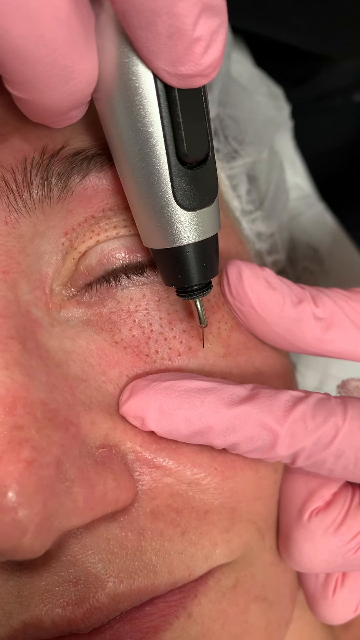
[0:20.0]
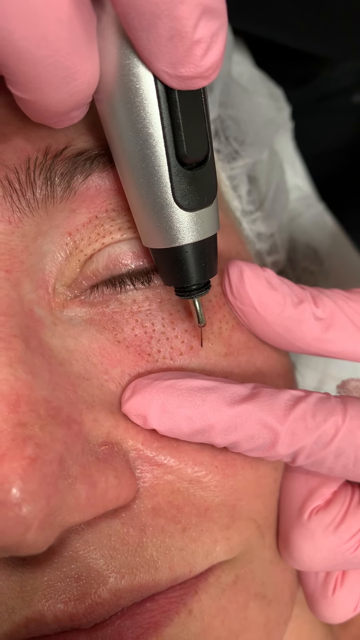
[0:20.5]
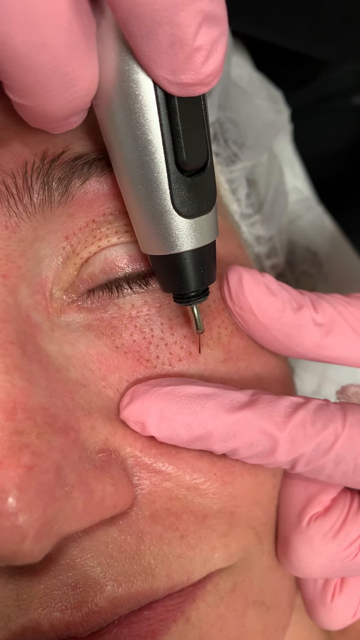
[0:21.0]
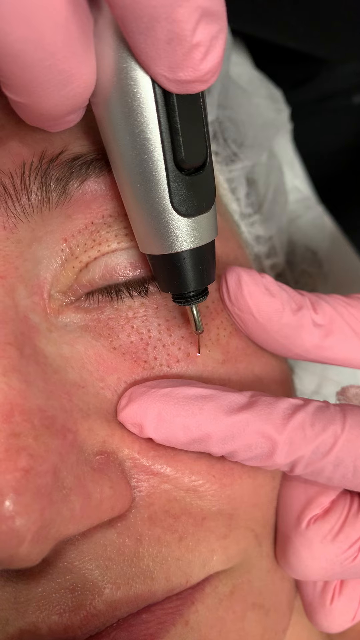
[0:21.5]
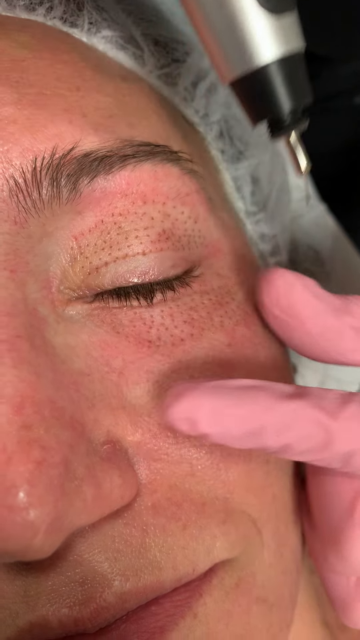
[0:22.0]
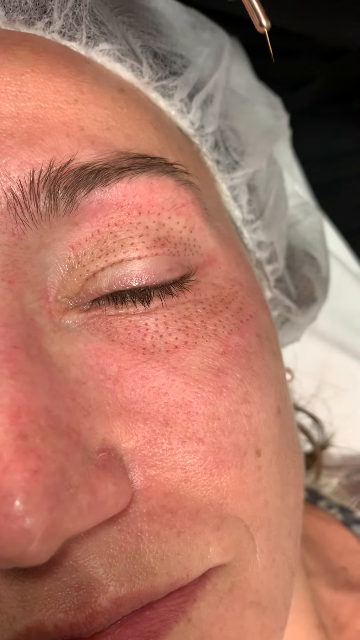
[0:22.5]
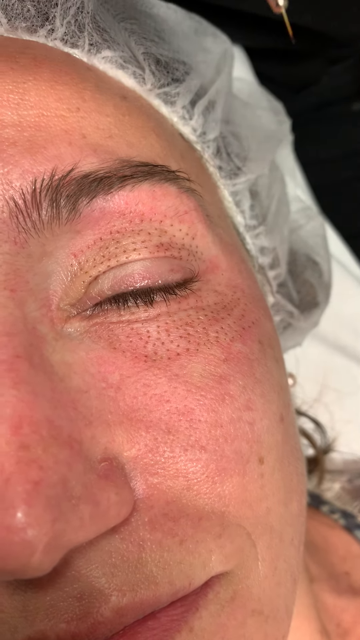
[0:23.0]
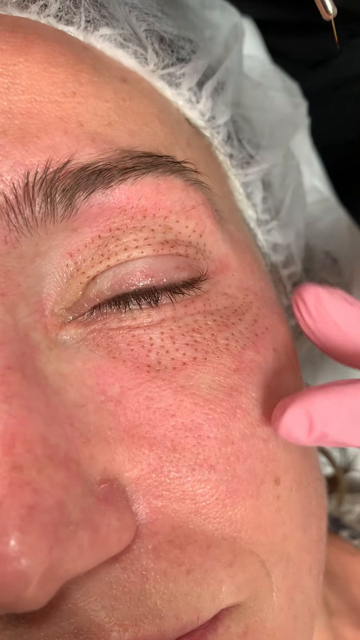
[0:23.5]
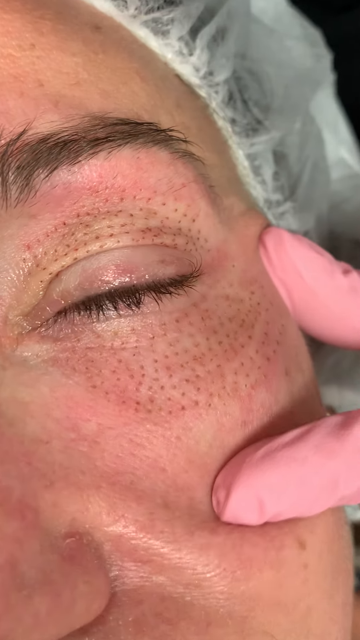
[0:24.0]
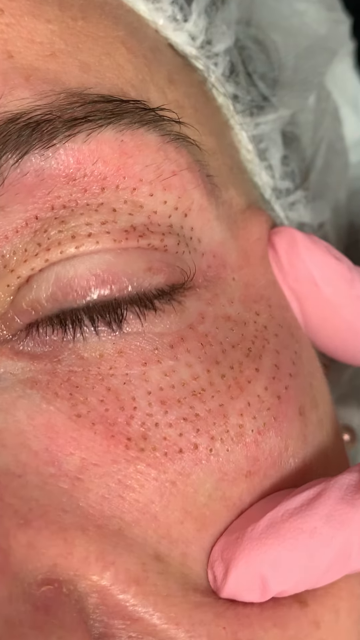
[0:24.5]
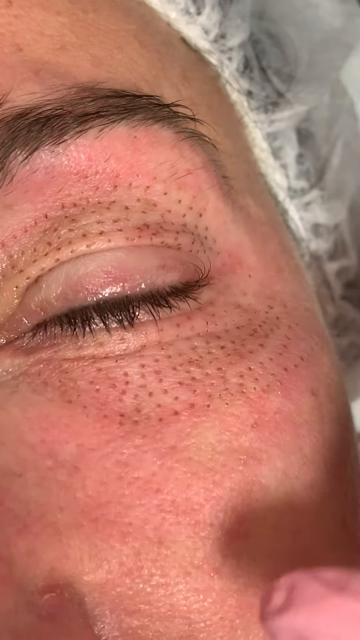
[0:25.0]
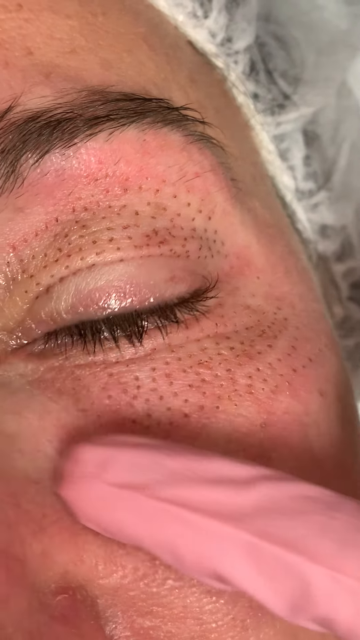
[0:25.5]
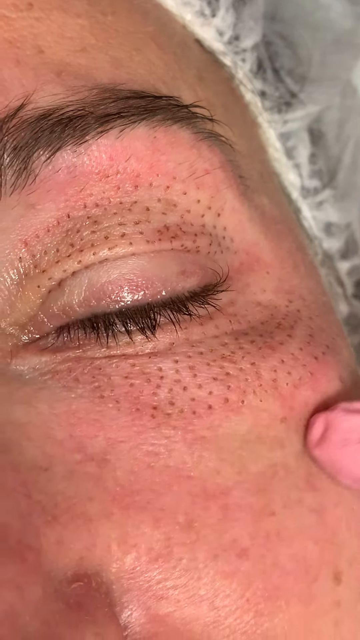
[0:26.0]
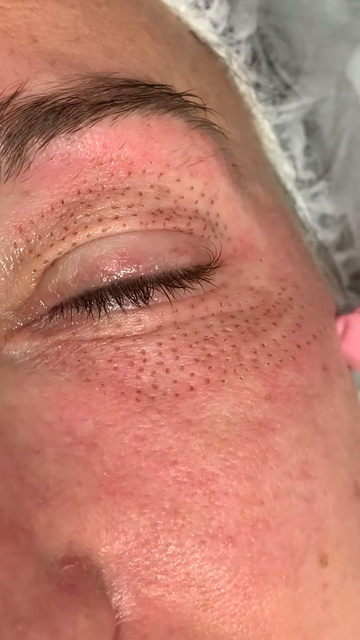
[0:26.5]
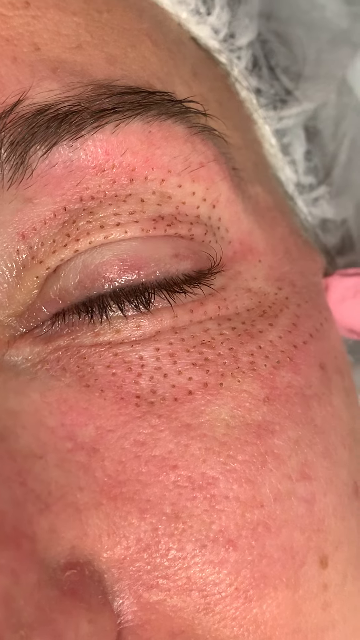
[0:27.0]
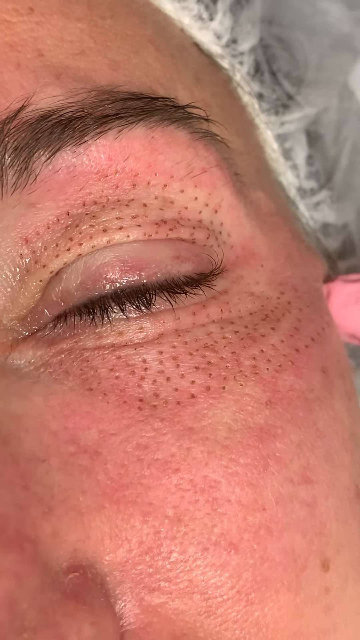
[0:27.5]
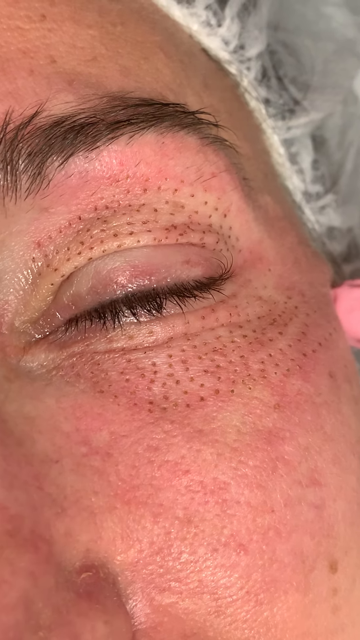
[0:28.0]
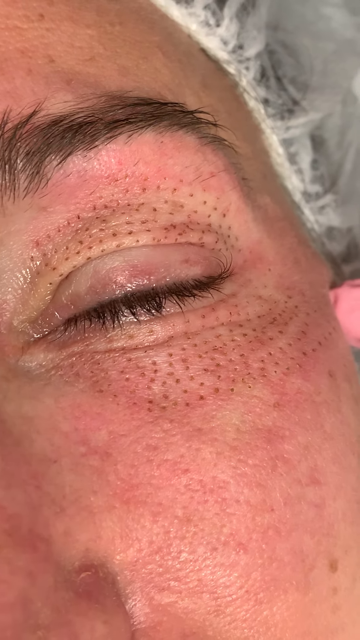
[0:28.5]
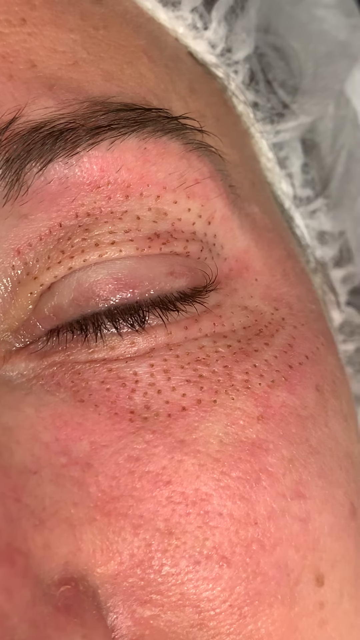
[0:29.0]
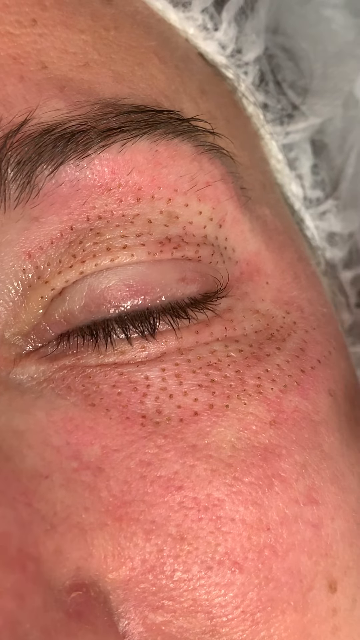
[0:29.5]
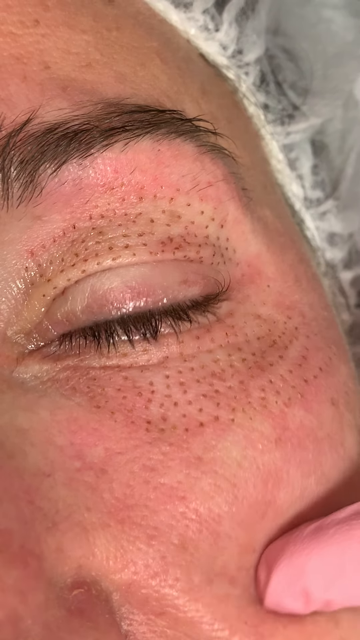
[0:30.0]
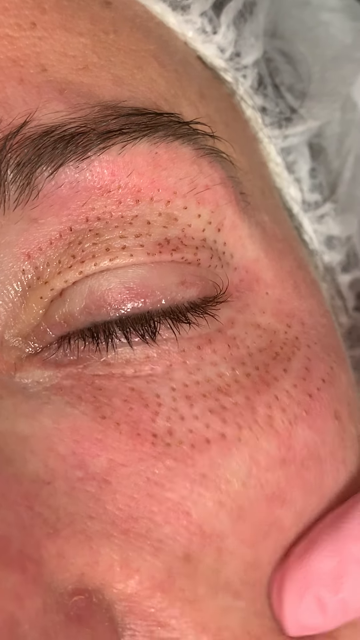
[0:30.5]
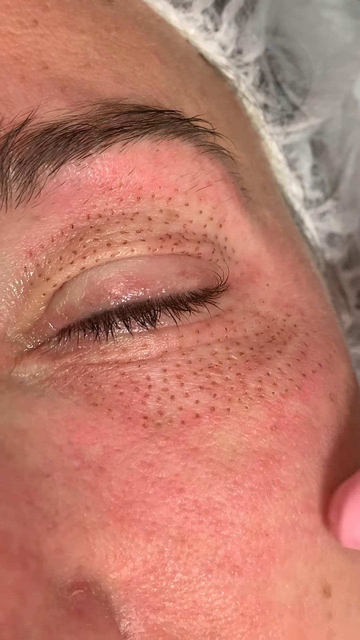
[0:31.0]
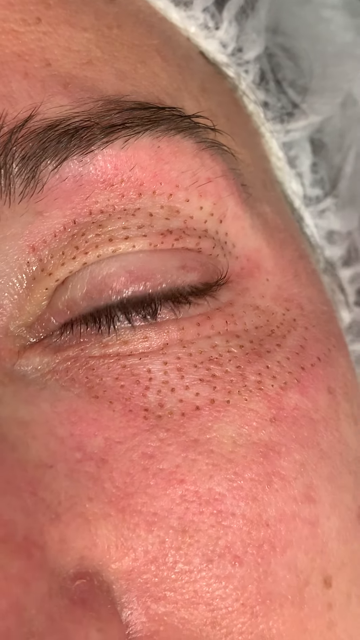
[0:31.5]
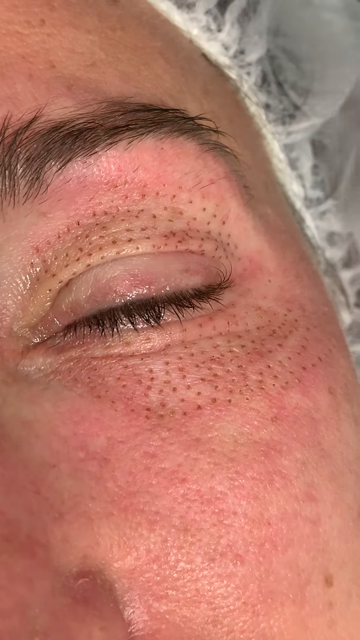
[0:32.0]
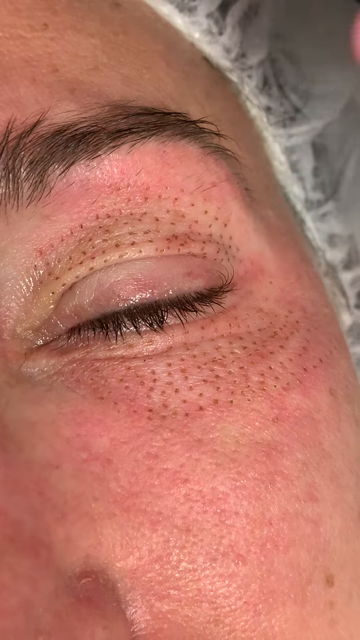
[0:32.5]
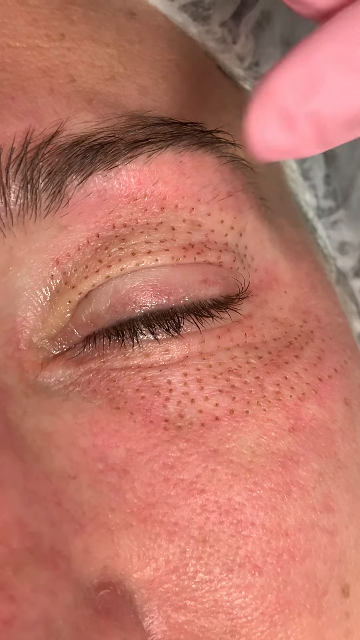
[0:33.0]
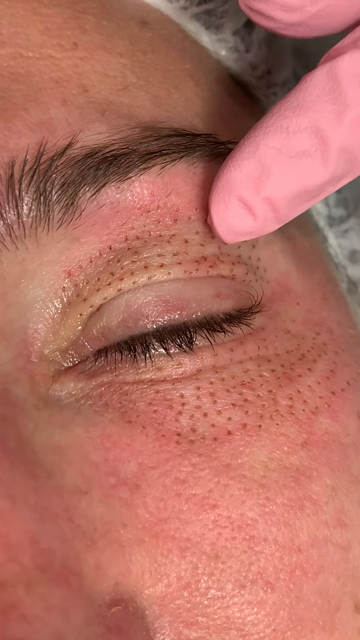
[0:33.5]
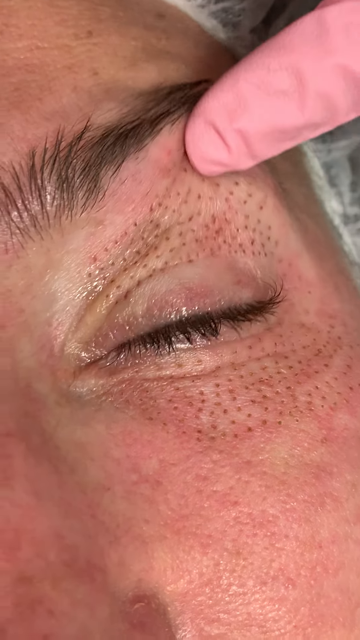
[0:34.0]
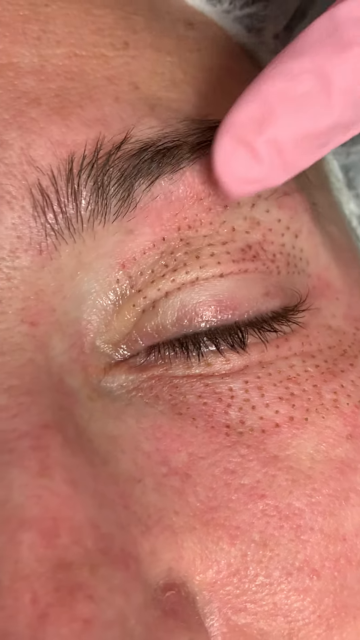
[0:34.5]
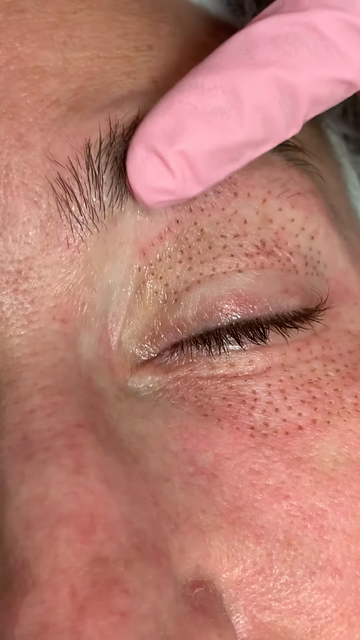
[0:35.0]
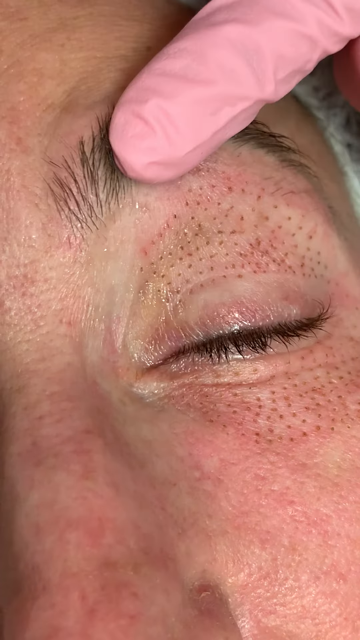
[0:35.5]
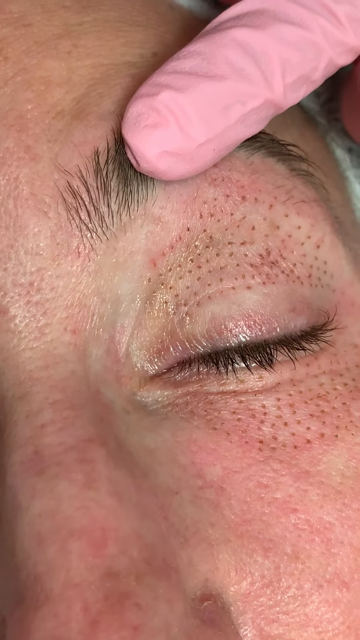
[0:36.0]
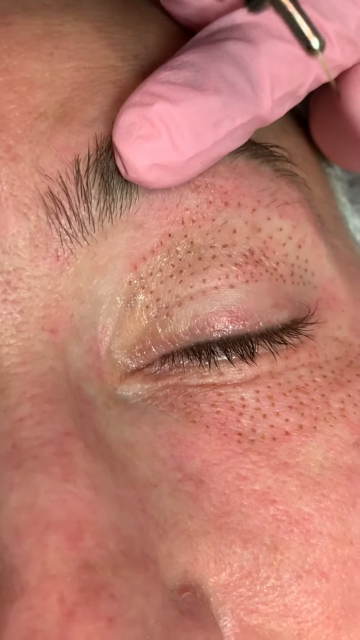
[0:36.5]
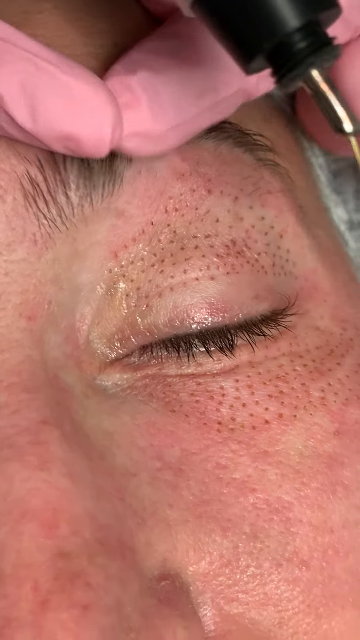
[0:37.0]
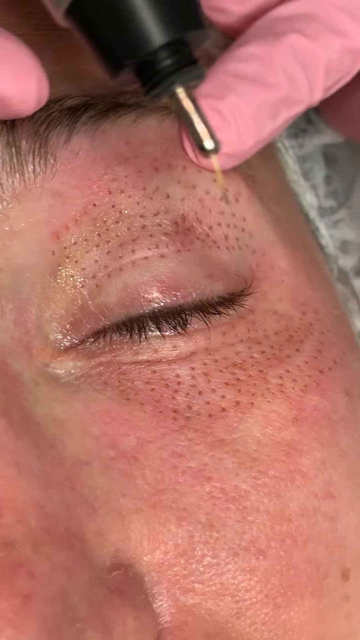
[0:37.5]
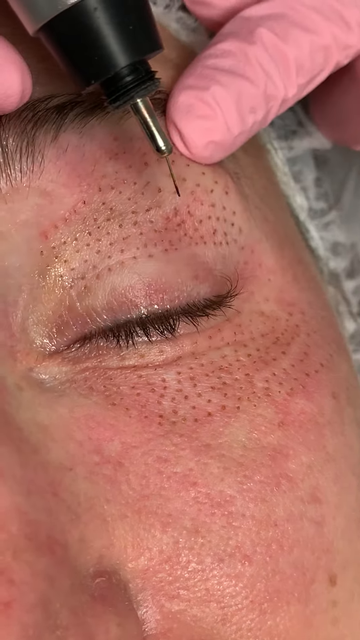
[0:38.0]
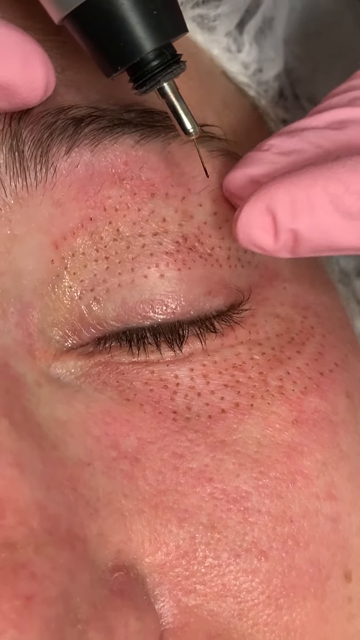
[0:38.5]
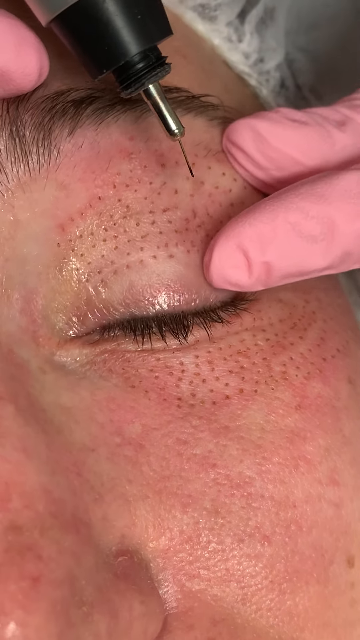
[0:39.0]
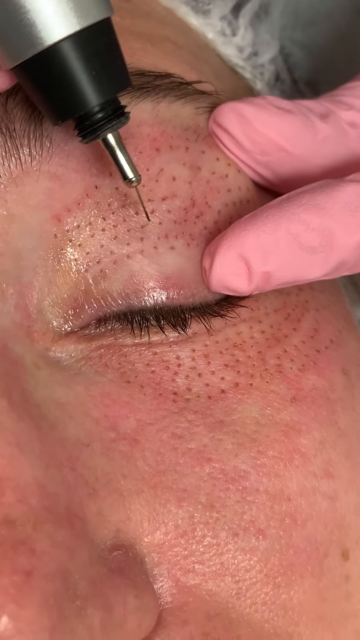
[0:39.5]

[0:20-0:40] An extreme close-up shows part of a woman's face: her closed left eye, her left eyebrow, most of her nose, the left half of her mouth and her left cheek. Above her is someone wearing pink surgical gloves; only the fingers of the person's right and left hands are visible. The right hand holds the skin by the woman's left cheekbone, and the left hand holds a metal device with a black tip, a black lever on the side and a sharp metal end. The metal tip is inserted into the woman's skin below her eye and around her eyelid. The camera zooms in, showing a series of brown dots on the areas below the eye and above the eyelid where the metal has been poking. They look like a freckle or a tattoo, are in fairly regular lines, and have been applied with the tip of the metal instrument. The camera zooms in closer on the brown dots, the woman's closed left eye and her eyebrow, and beyond that the outline of a surgical cap she is wearing.